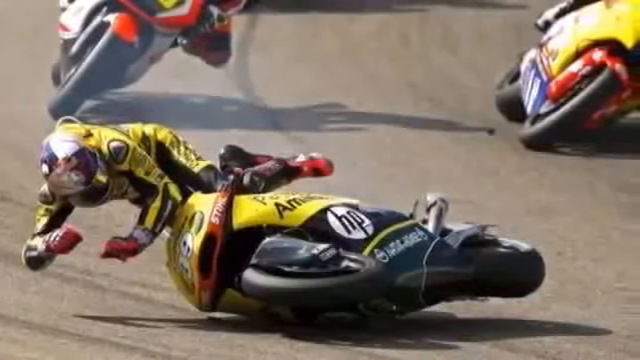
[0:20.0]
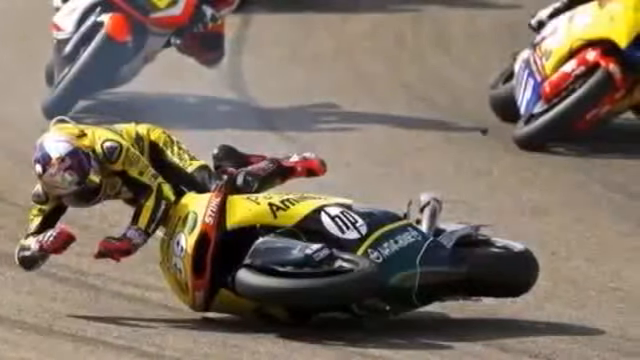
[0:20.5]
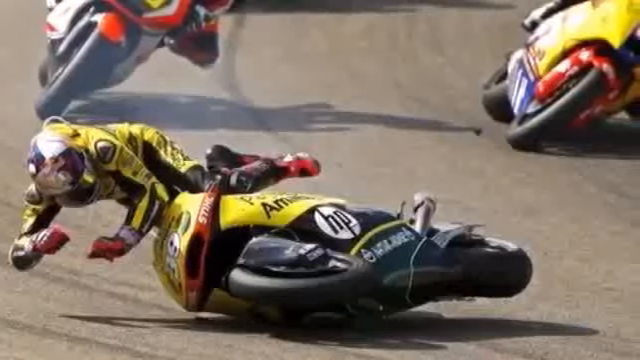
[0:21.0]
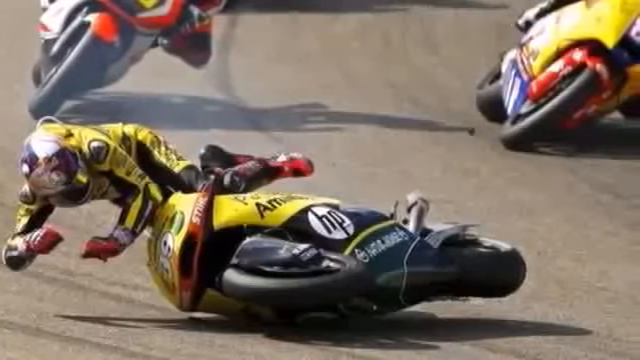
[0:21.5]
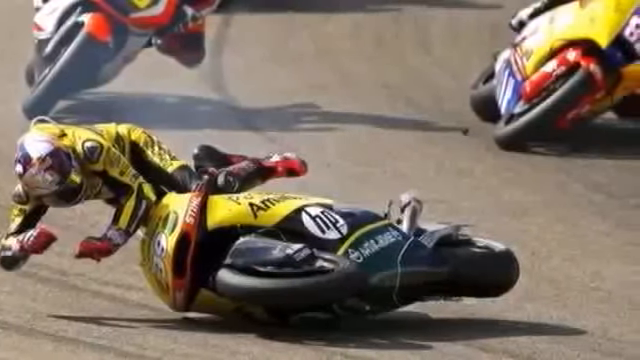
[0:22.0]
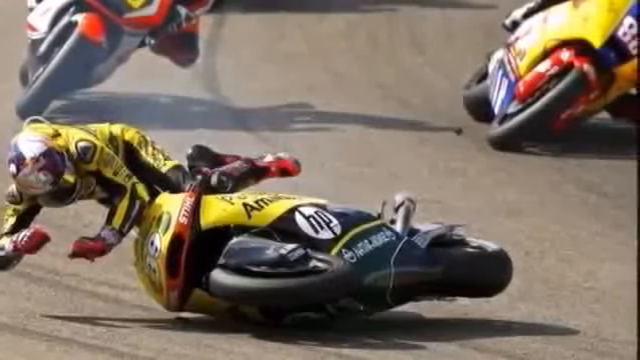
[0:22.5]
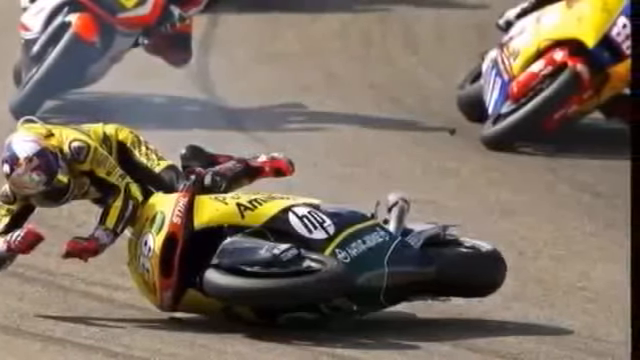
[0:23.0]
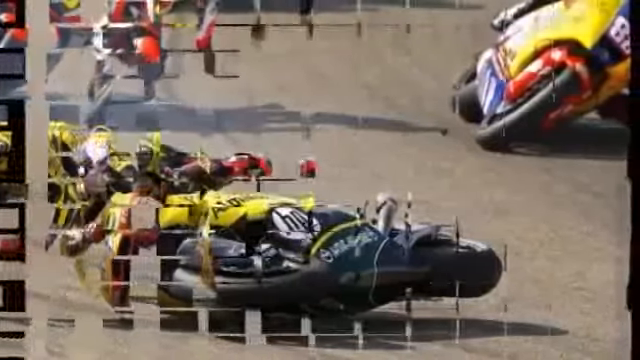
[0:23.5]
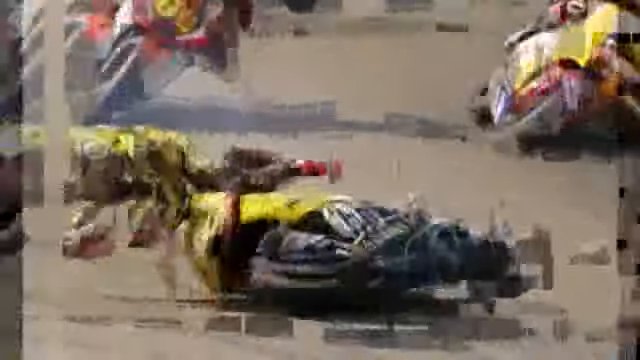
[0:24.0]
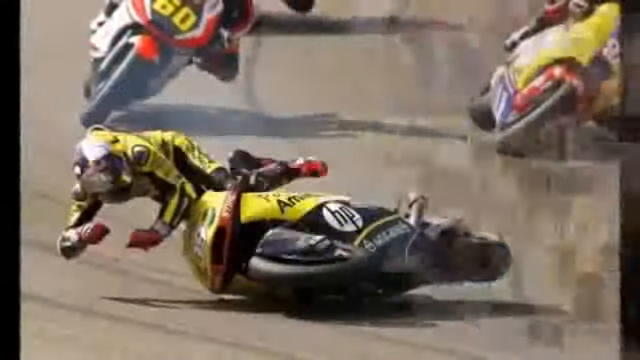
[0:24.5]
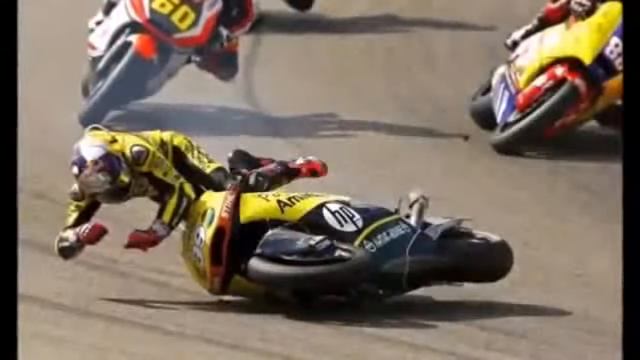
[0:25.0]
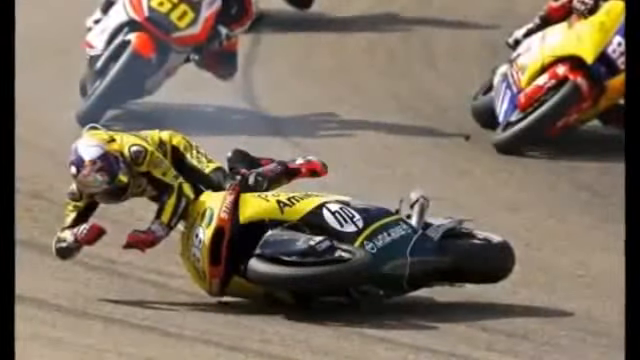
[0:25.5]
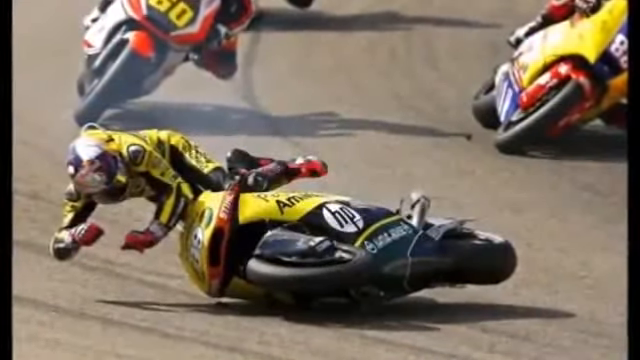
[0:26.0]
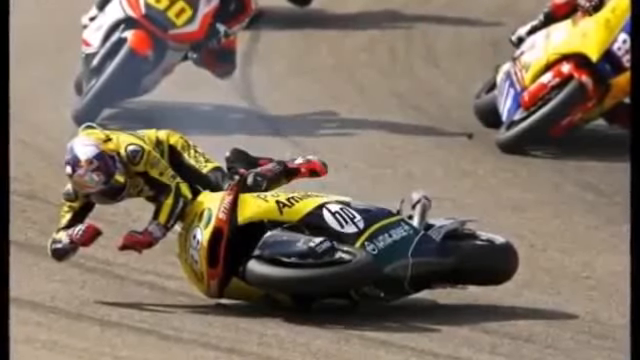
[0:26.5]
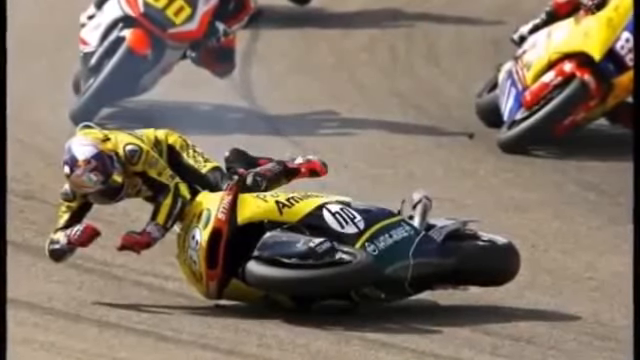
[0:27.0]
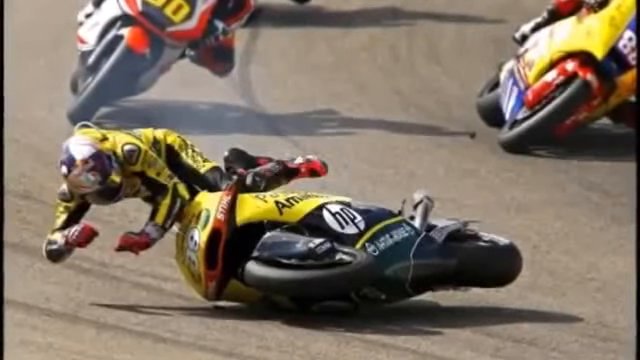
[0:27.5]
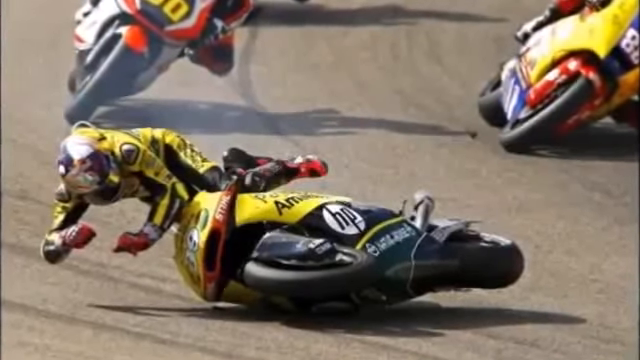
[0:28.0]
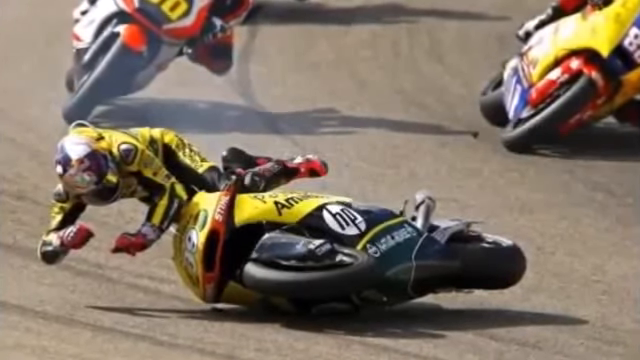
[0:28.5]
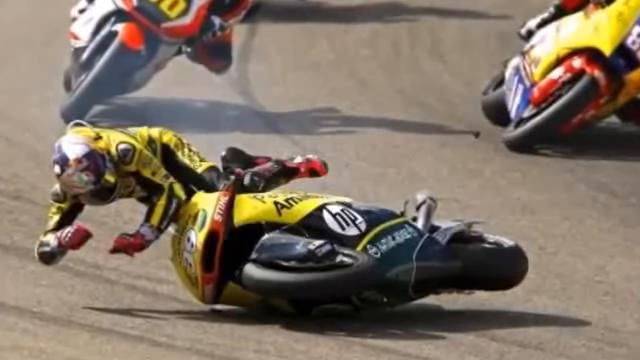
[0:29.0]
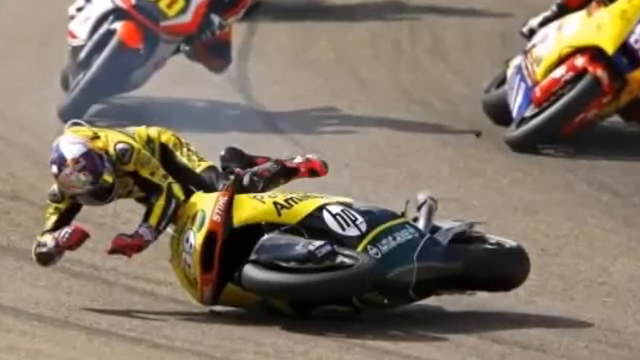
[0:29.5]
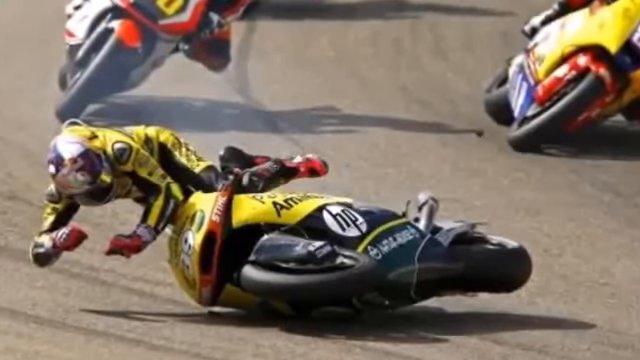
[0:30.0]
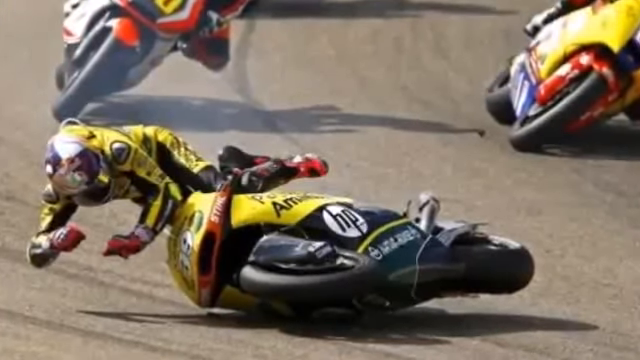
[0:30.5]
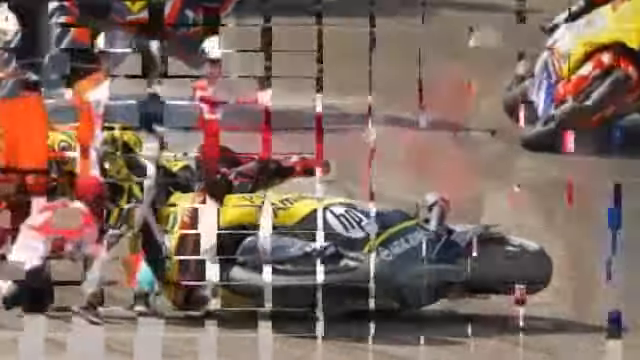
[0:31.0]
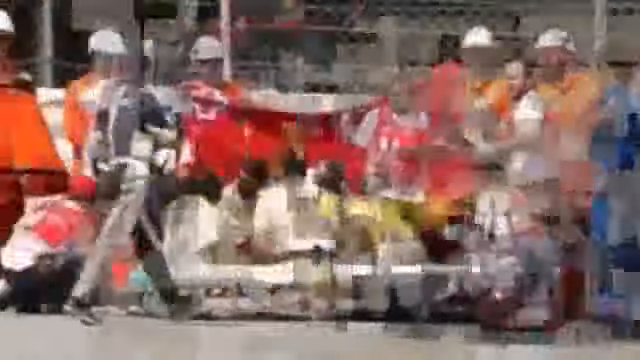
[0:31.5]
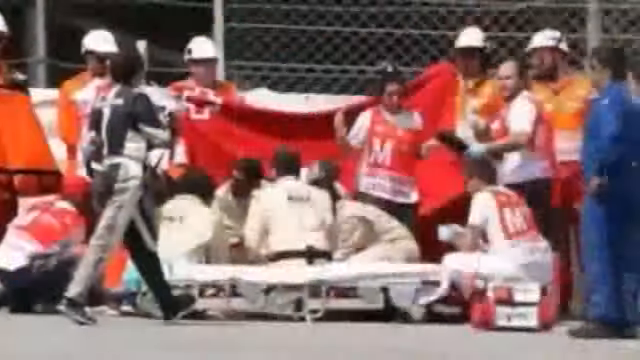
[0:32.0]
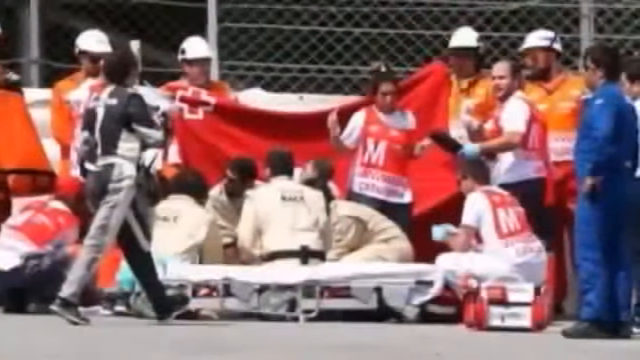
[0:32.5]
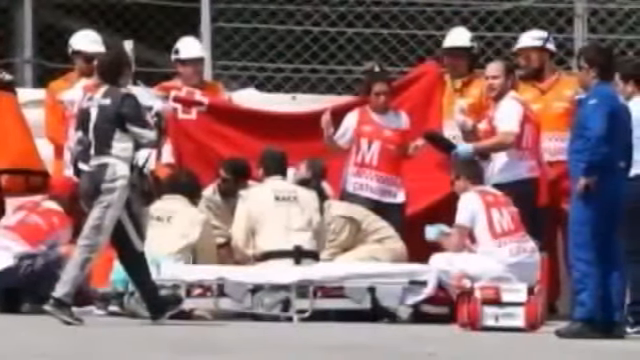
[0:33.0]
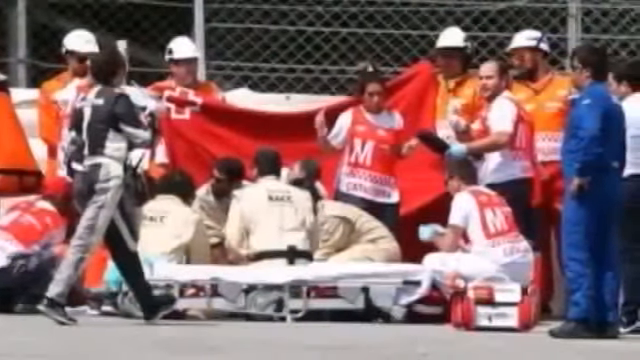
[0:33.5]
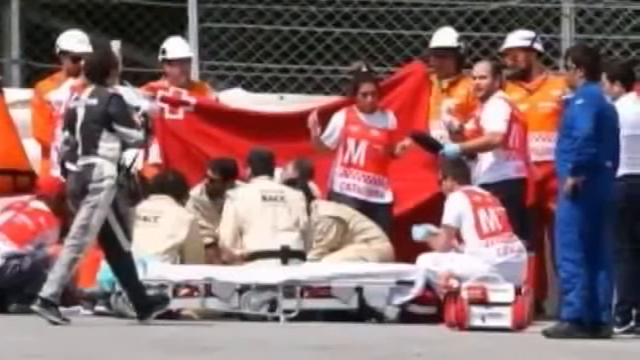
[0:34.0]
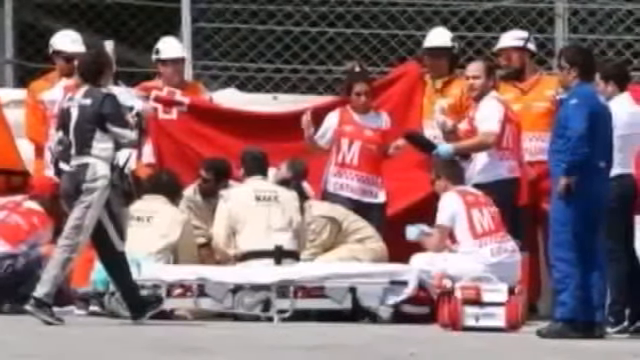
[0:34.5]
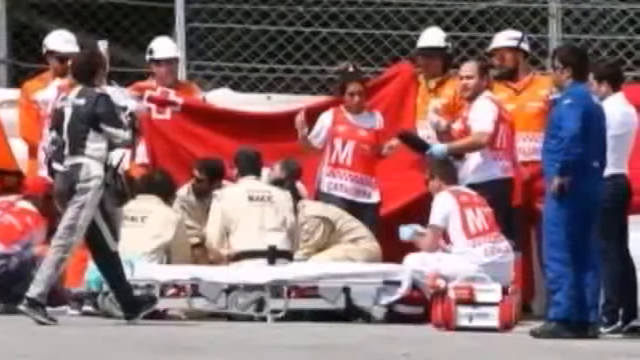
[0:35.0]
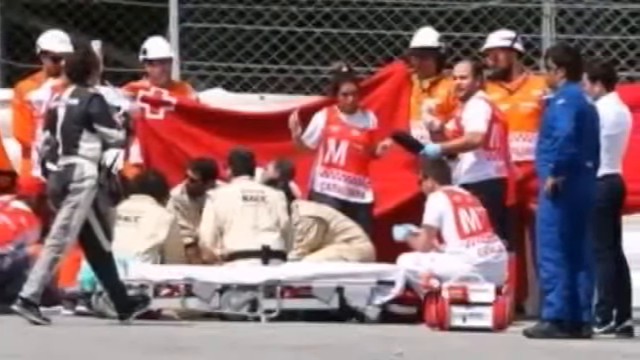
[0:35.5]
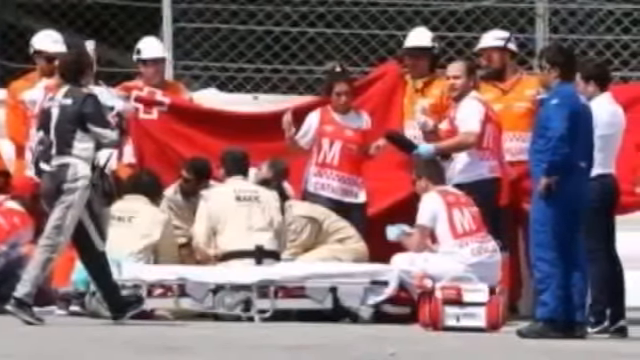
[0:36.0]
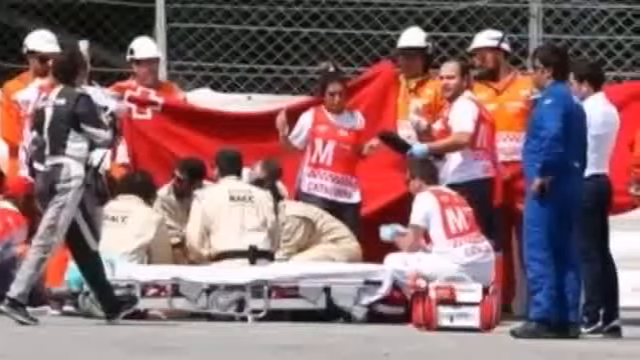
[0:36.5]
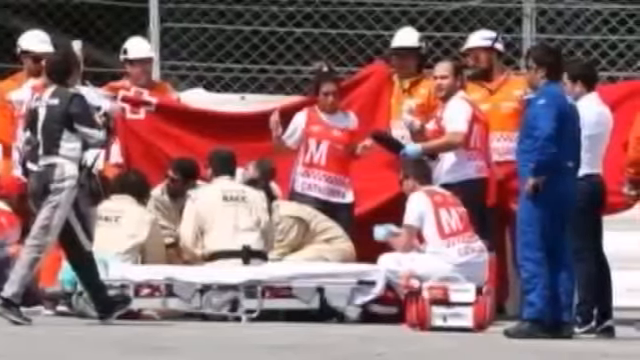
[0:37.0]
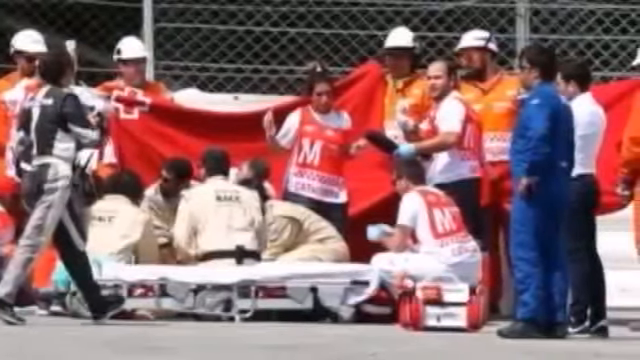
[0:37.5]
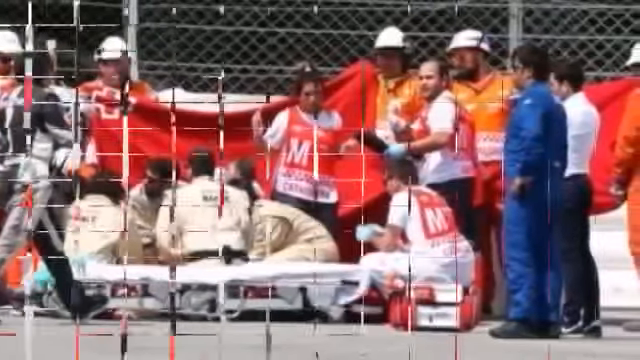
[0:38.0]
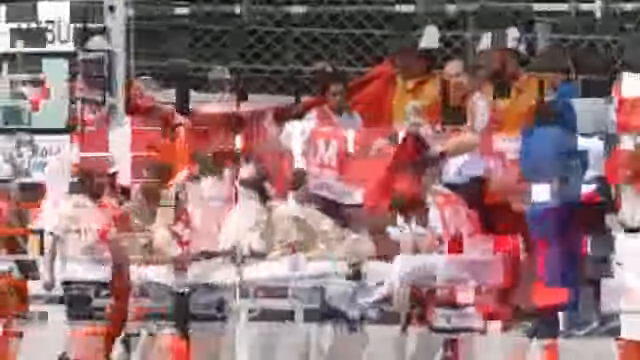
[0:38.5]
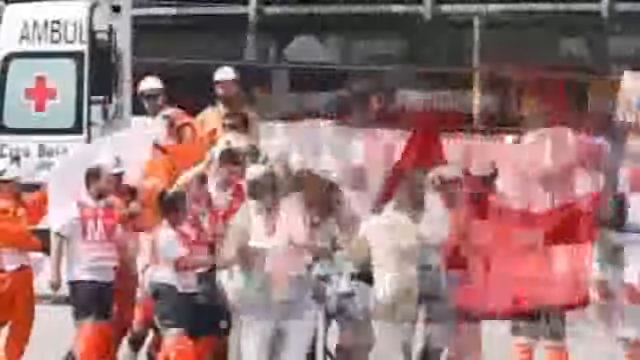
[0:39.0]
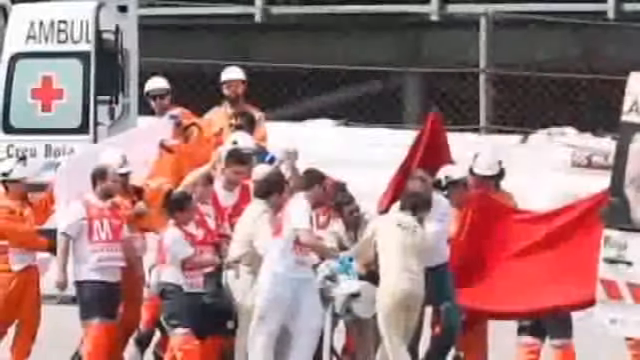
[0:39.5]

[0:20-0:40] A still shot shows the person falling off the motorbike. The view closes in and moves to the right, then blurs or fades in what looks like a checkerboard transition into the next image, where the person in a black and yellow suit is falling with his arms extended forward, bracing for impact as he is about to hit the pavement. The bike is on the ground and he is on the pavement, and in the background two other motorbike racers are about to turn past him. A cut leads to an ambulance and medical staff working on the person. The camera pans left to right across a still image, and another cut shows more people working on the injured person.